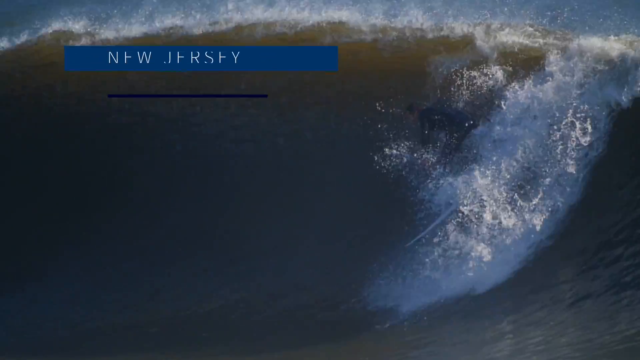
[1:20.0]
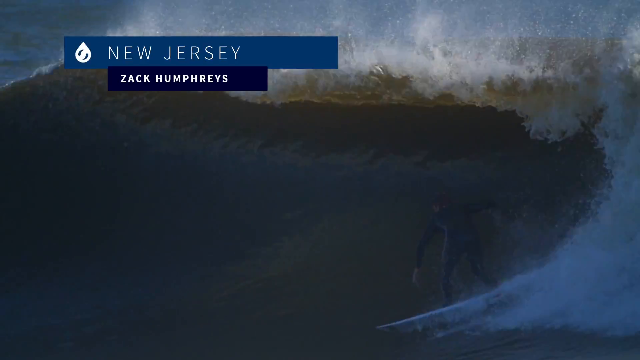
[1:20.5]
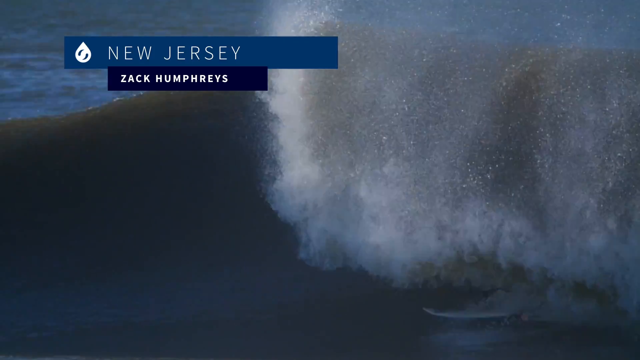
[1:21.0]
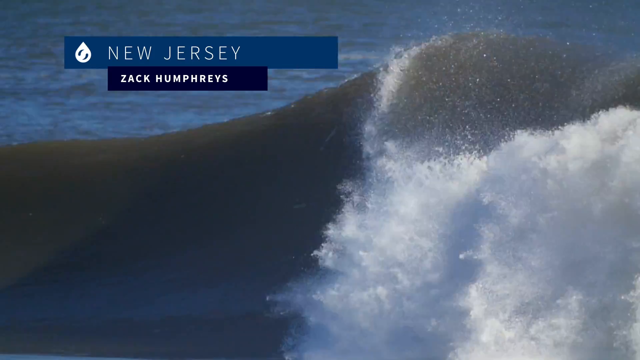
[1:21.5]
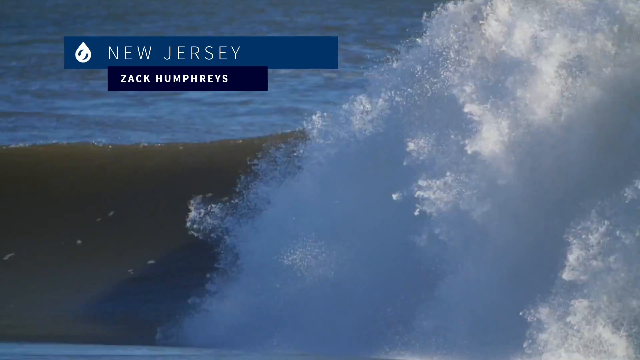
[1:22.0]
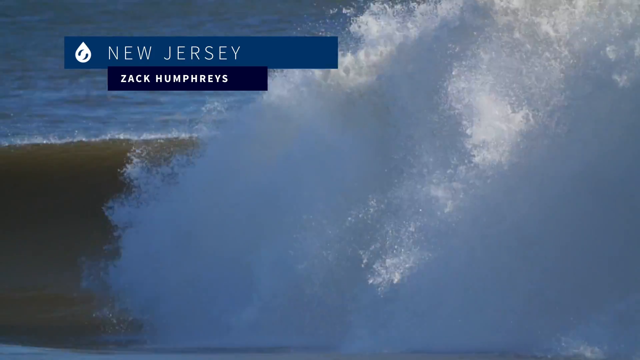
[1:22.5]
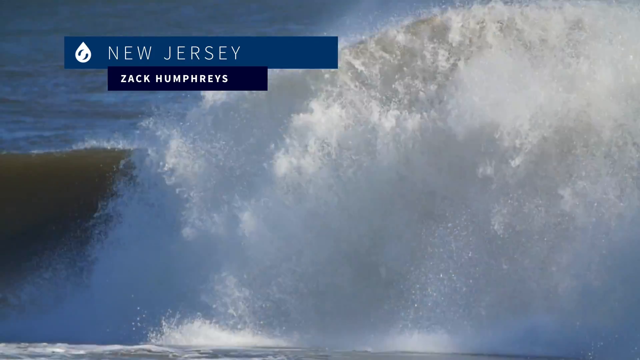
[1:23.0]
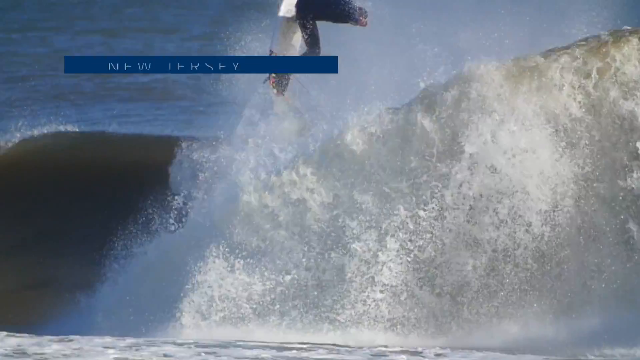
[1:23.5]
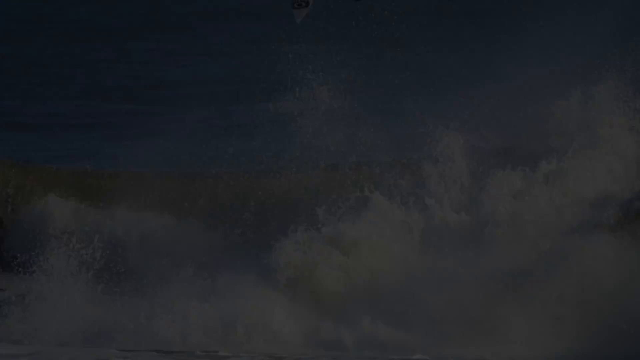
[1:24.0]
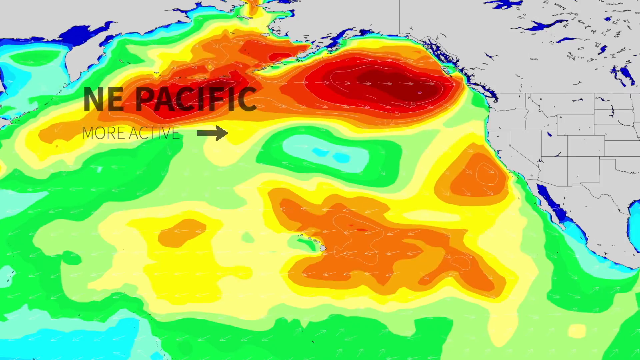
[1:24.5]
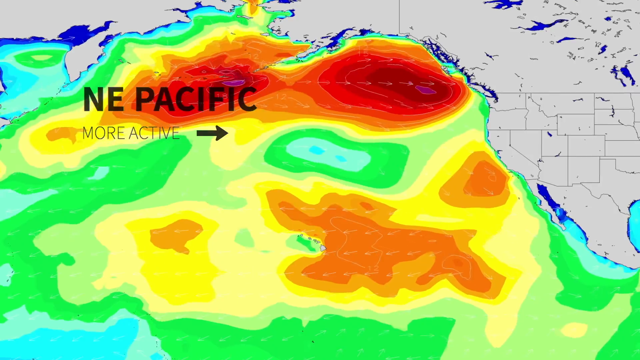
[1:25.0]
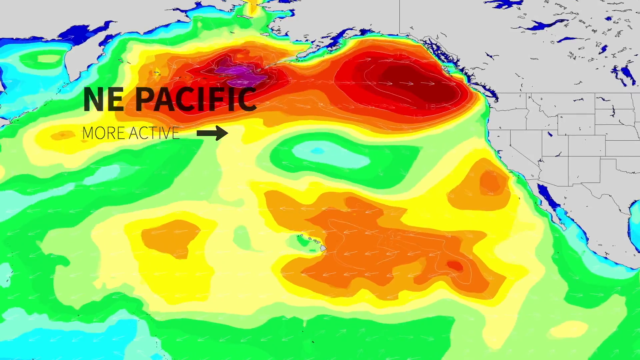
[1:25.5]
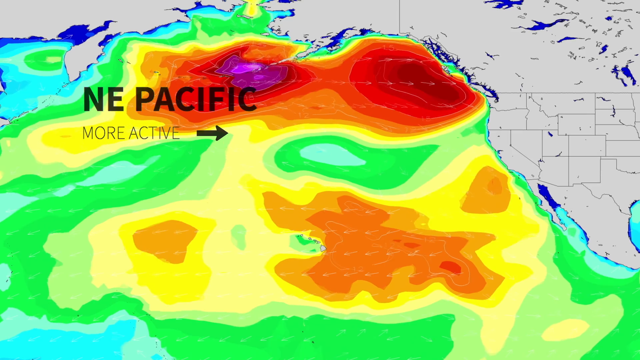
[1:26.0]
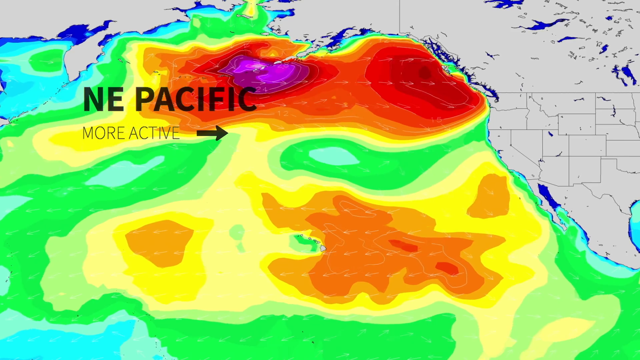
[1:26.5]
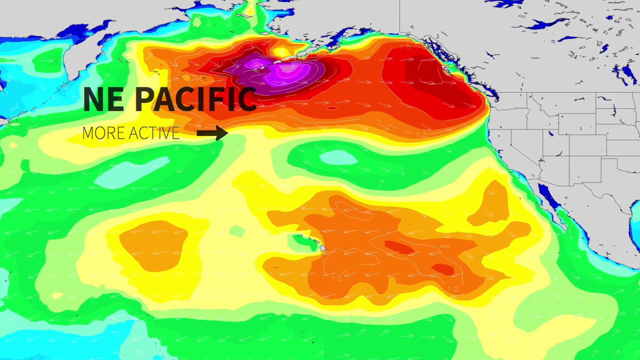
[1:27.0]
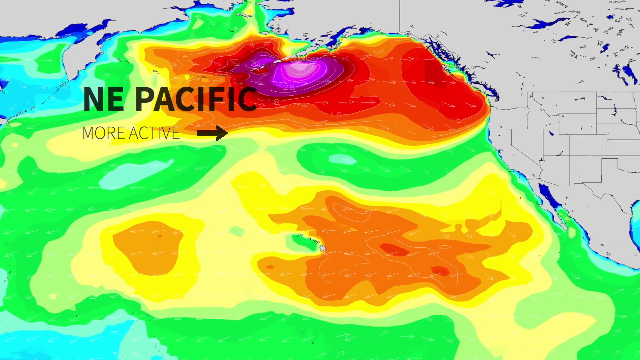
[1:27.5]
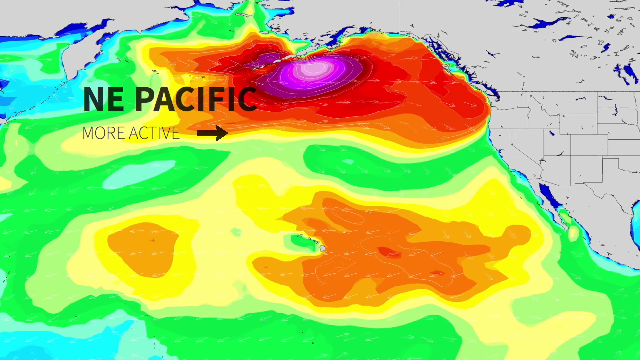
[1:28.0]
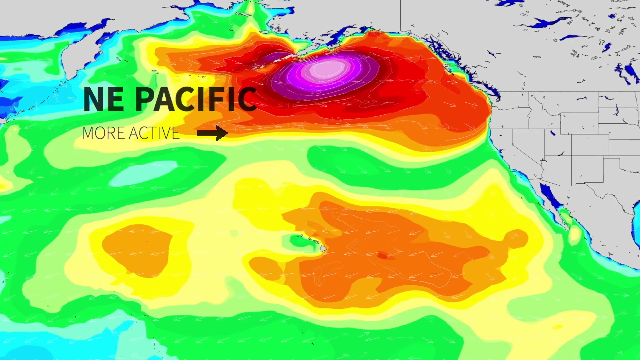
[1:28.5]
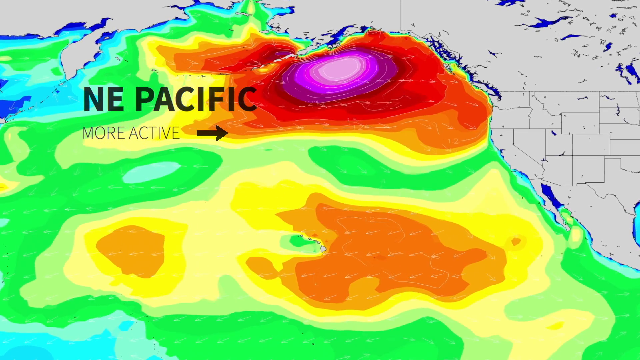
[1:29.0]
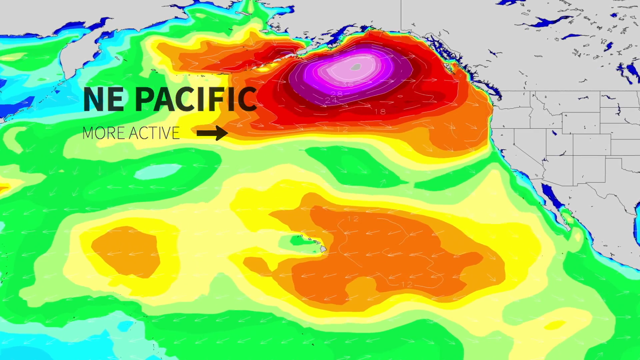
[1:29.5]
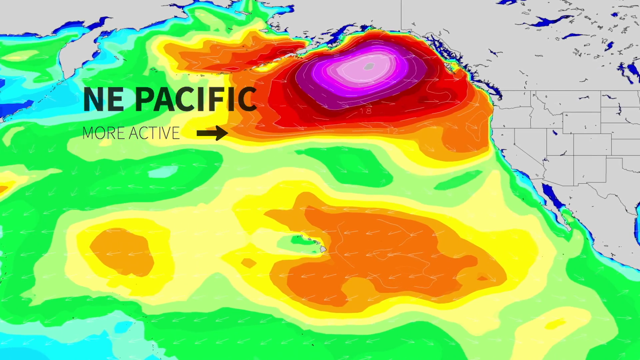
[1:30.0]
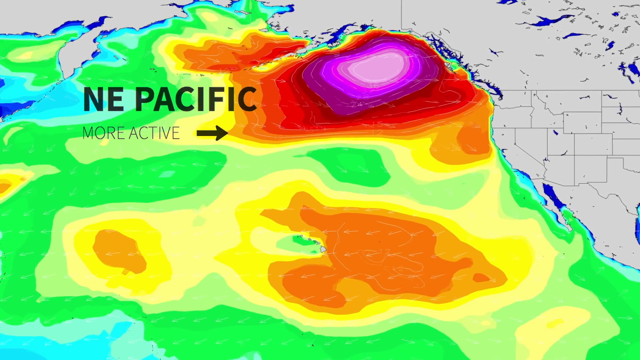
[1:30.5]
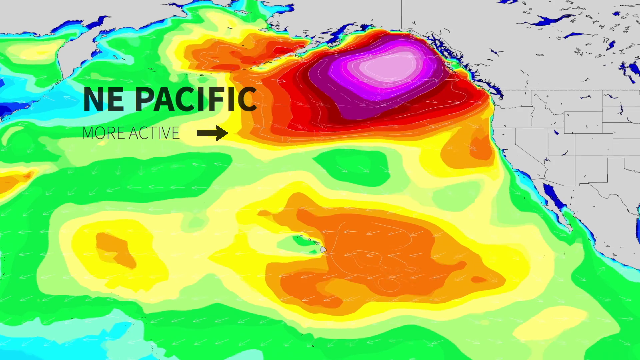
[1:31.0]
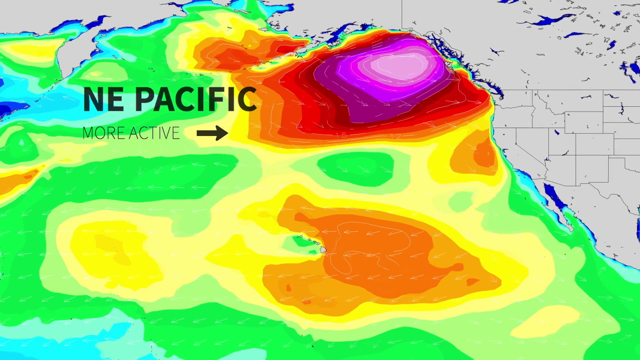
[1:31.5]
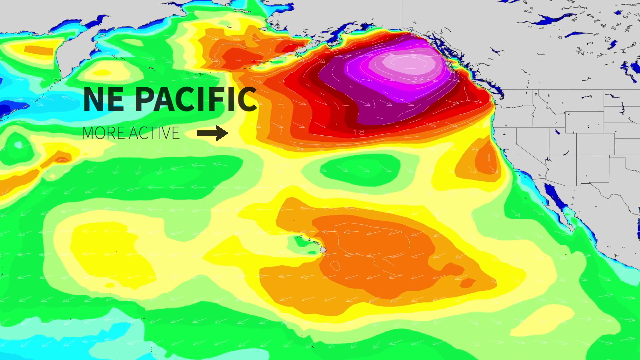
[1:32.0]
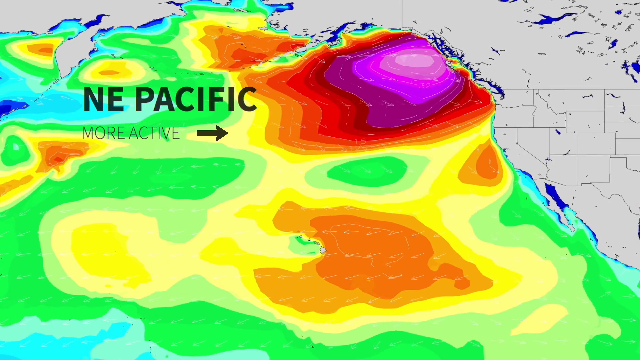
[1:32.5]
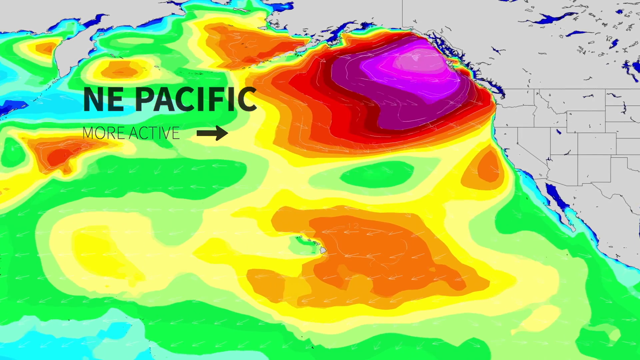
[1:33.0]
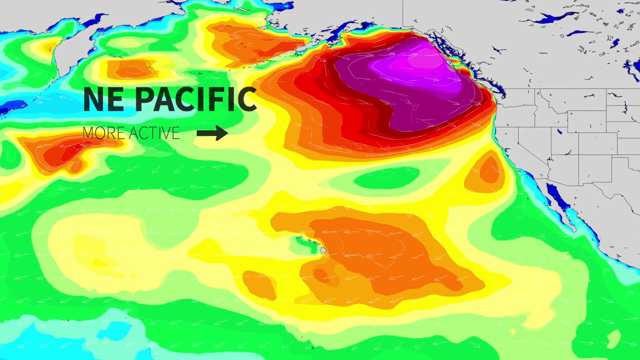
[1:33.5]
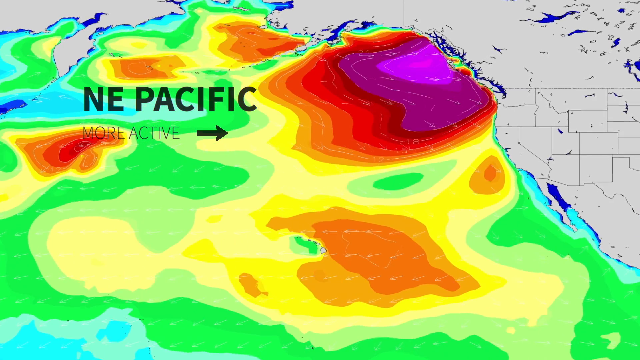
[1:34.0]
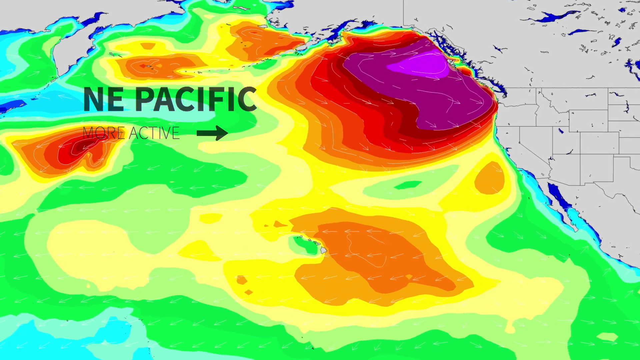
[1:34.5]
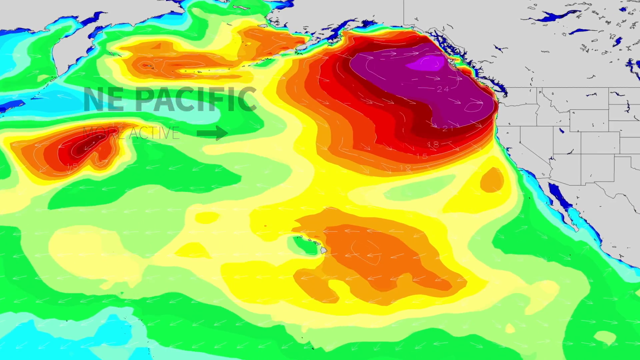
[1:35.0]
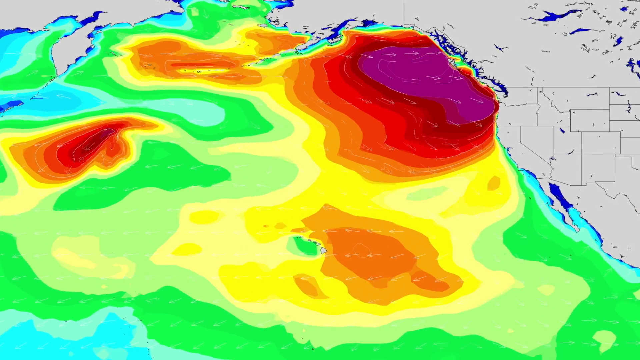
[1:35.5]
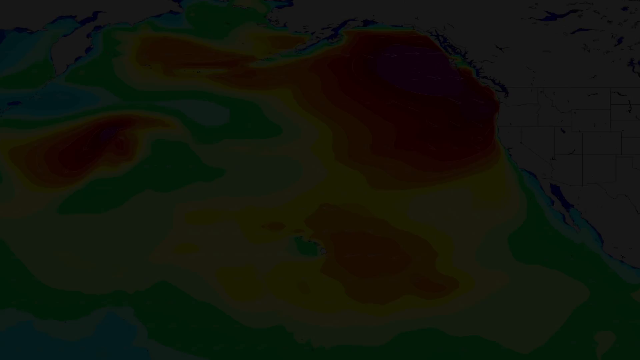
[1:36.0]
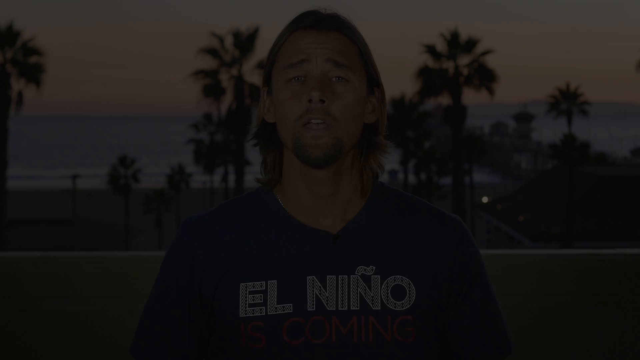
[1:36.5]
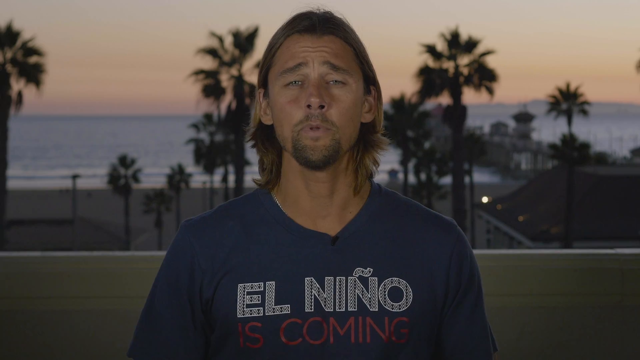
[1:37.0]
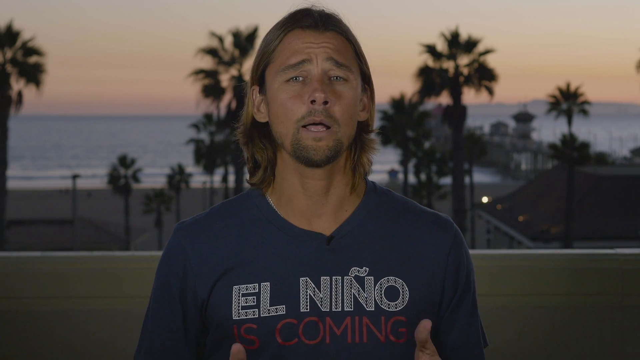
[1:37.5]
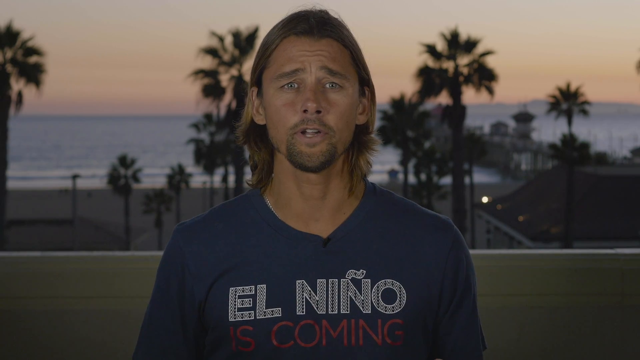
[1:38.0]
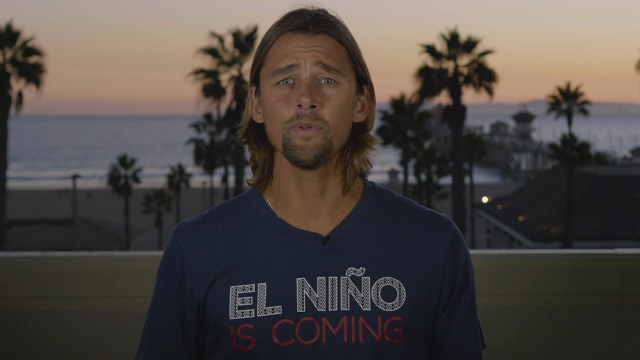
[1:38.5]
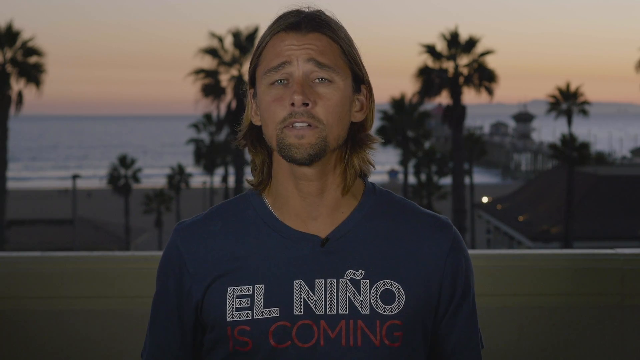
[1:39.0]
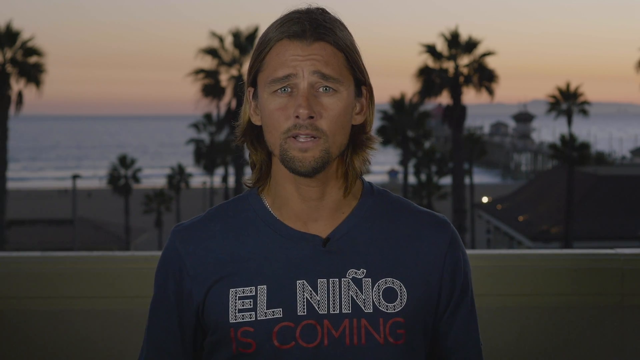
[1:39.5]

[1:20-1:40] Footage apparently from New Jersey appears, with "New Jersey" at the top left in a blue horizontal banner and, right below it, "Zach Humphries" in a much smaller dark navy blue banner. Waves come down, and a man surfing in a wave jumps up. Another Doppler radar animation follows, showing the Northeast Pacific being more active and pointing at a hurricane that is about to hit the beach. The video then cuts back to the man from the beginning in the "El Nino is coming" shirt, who looks the same.